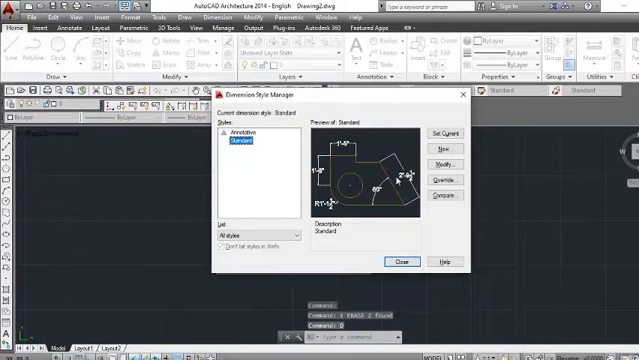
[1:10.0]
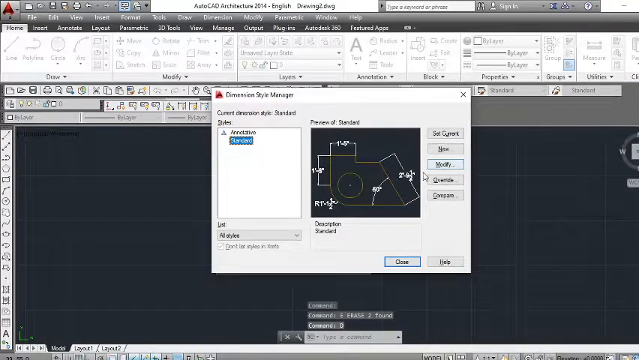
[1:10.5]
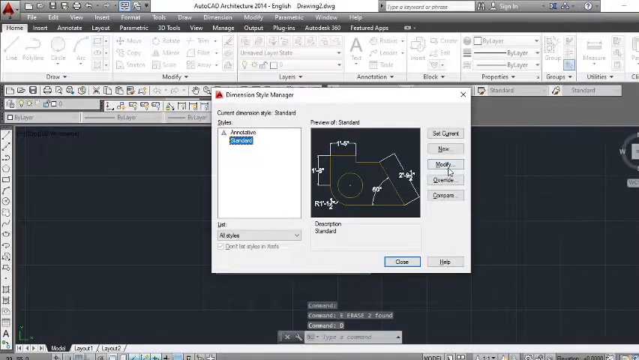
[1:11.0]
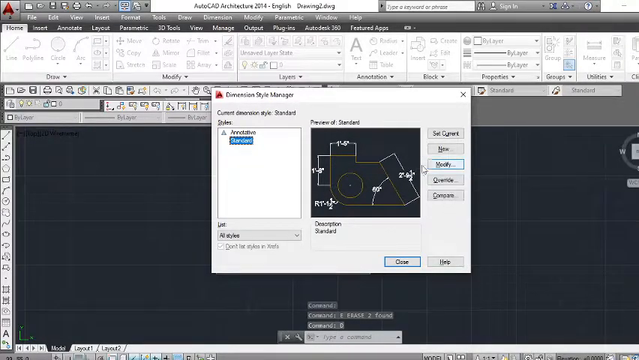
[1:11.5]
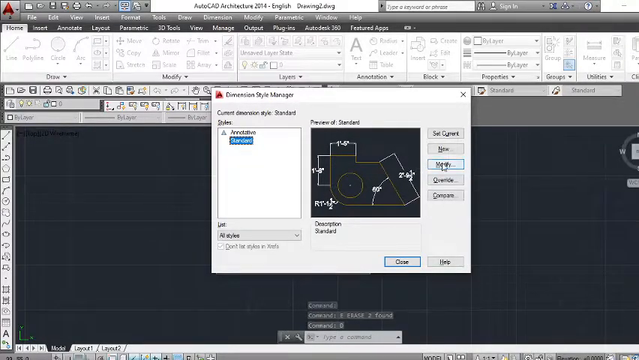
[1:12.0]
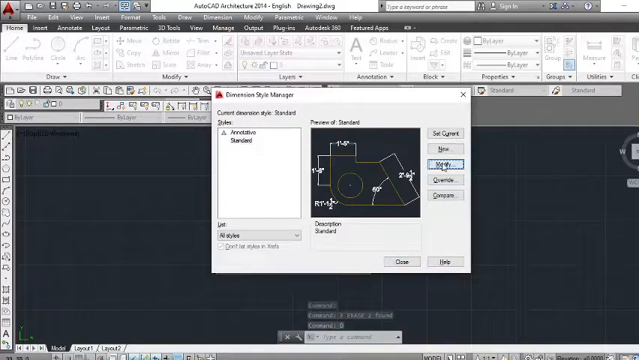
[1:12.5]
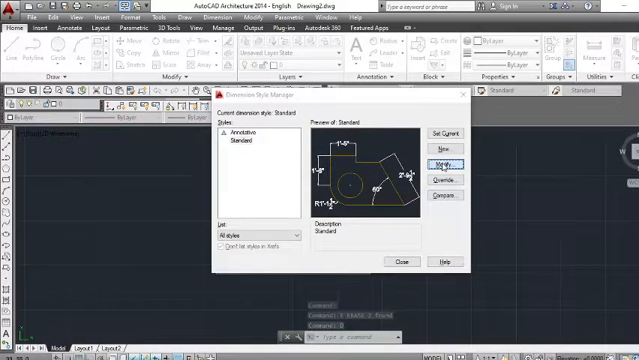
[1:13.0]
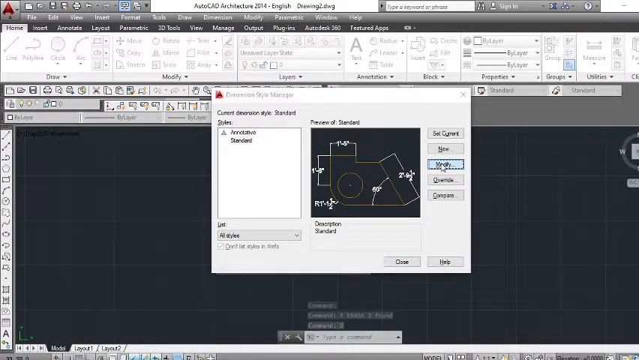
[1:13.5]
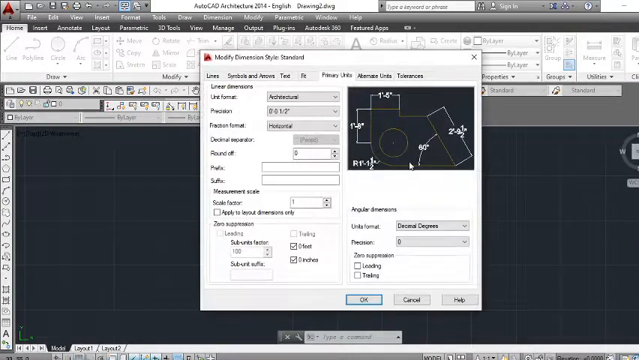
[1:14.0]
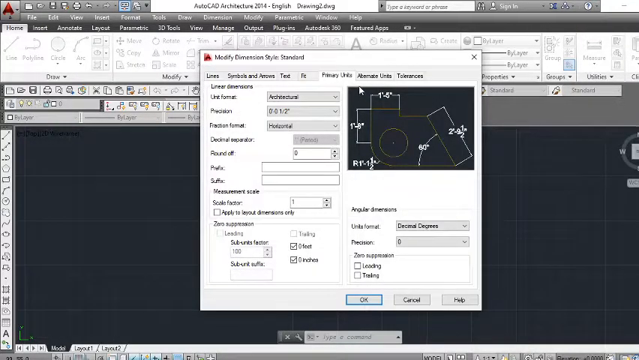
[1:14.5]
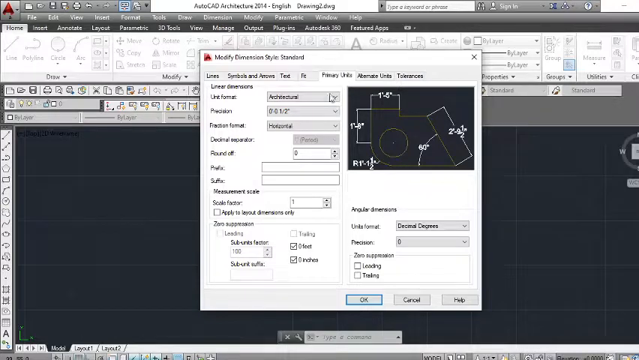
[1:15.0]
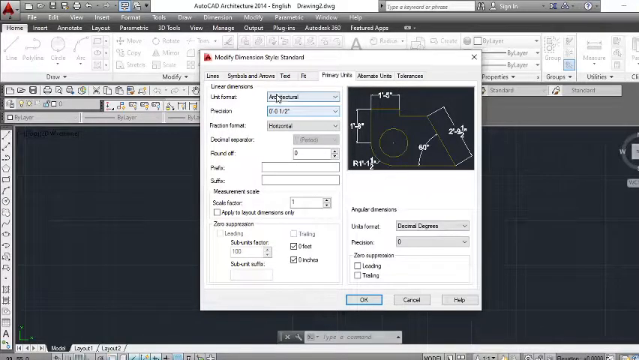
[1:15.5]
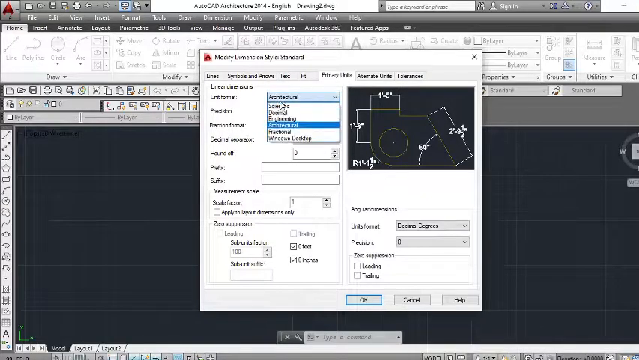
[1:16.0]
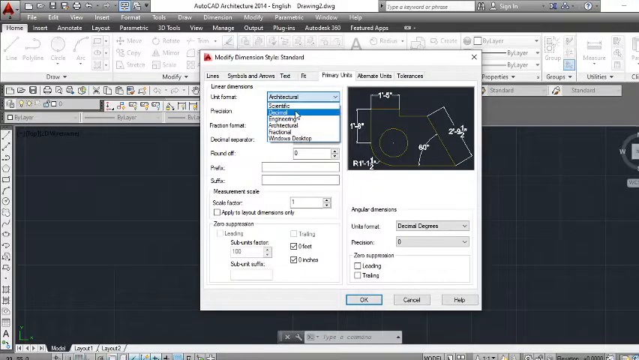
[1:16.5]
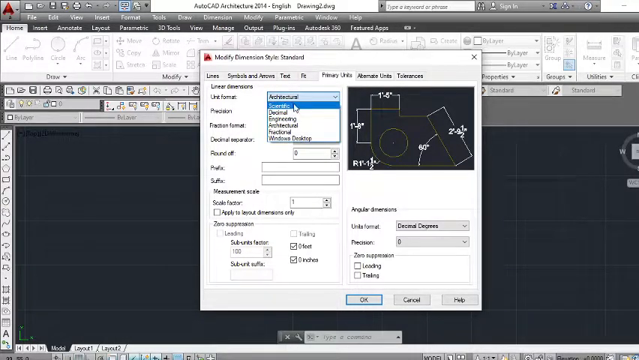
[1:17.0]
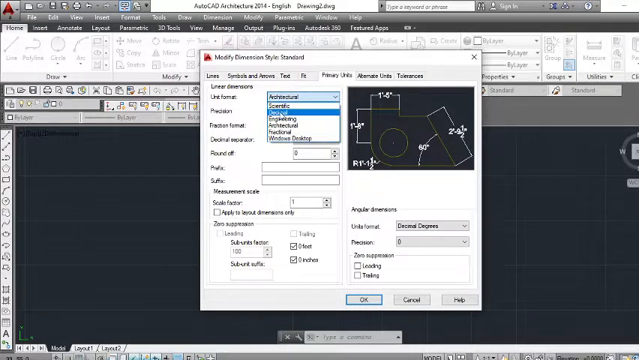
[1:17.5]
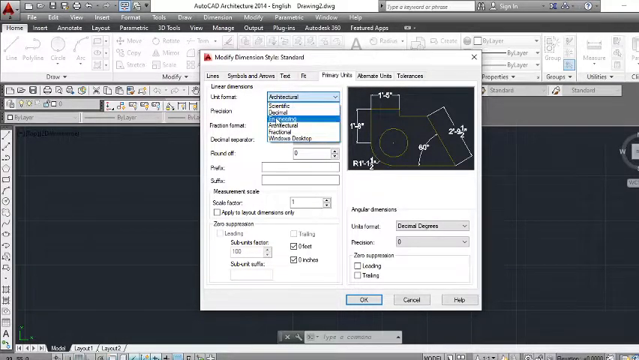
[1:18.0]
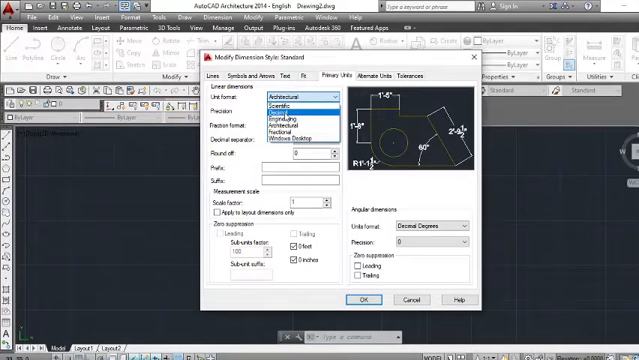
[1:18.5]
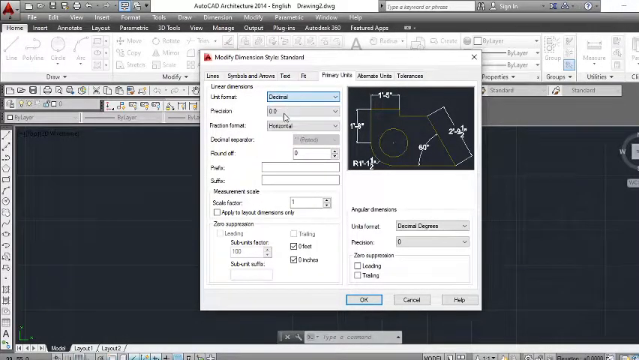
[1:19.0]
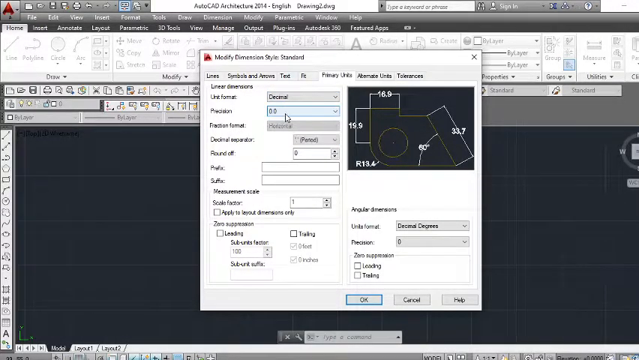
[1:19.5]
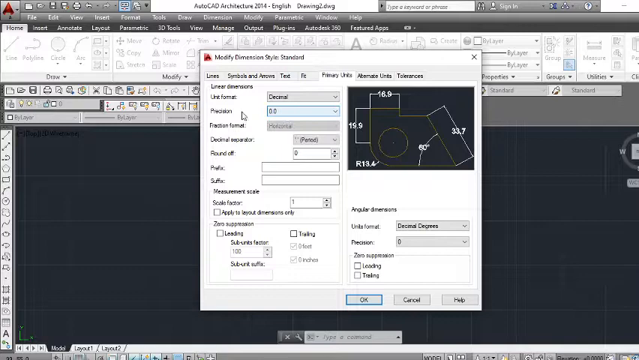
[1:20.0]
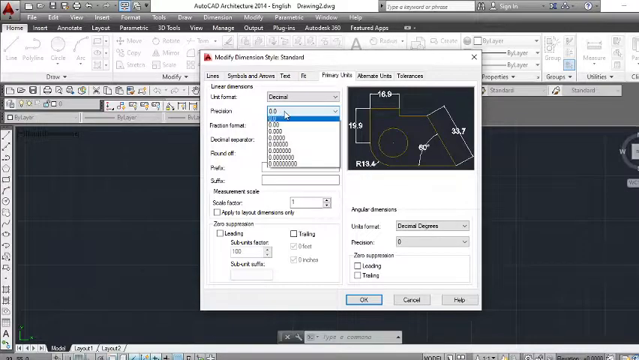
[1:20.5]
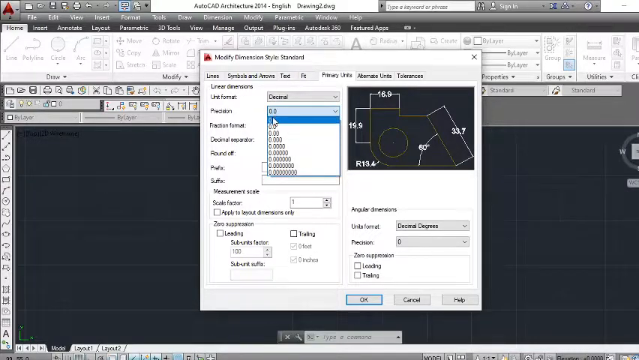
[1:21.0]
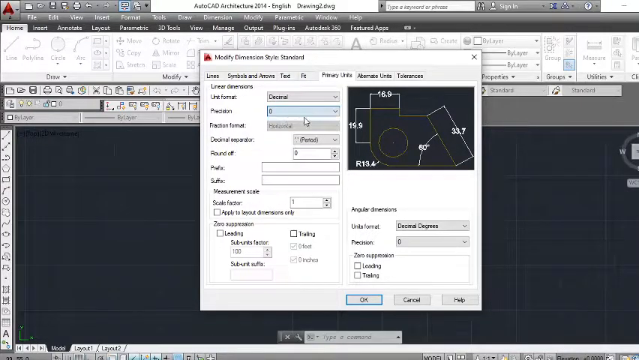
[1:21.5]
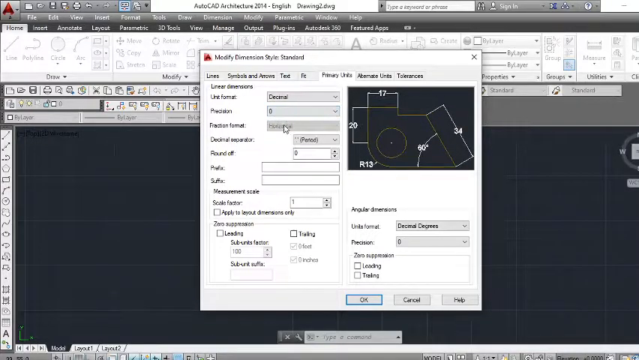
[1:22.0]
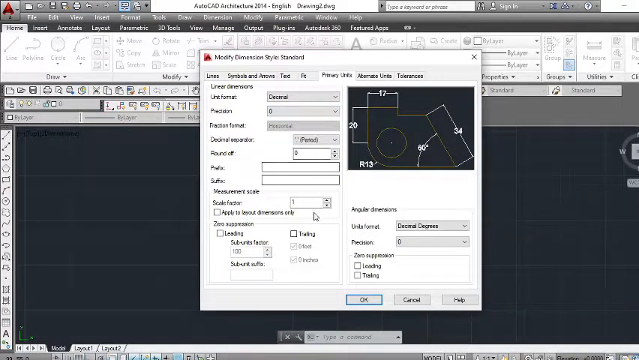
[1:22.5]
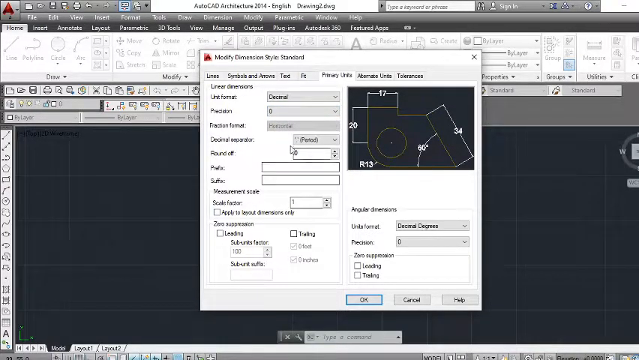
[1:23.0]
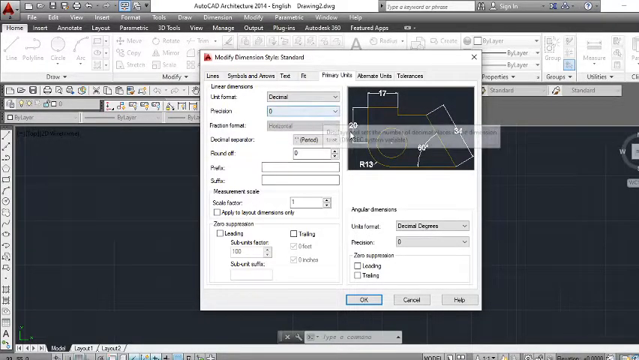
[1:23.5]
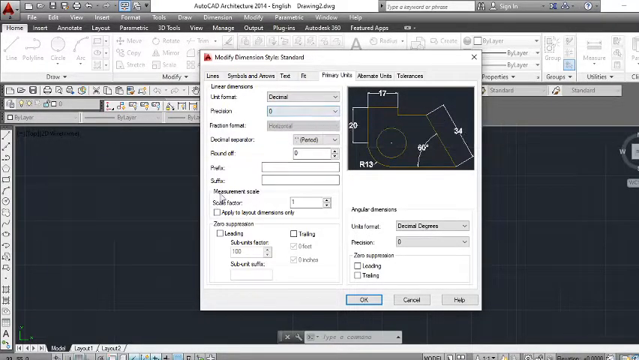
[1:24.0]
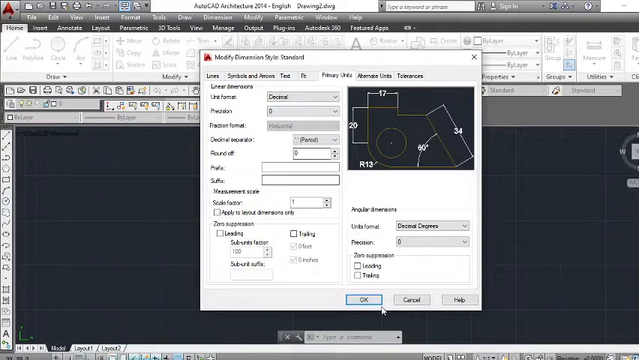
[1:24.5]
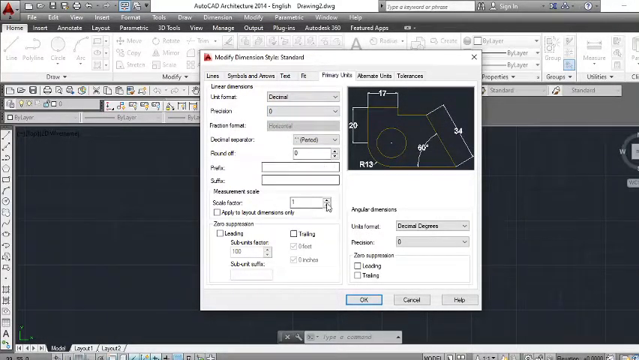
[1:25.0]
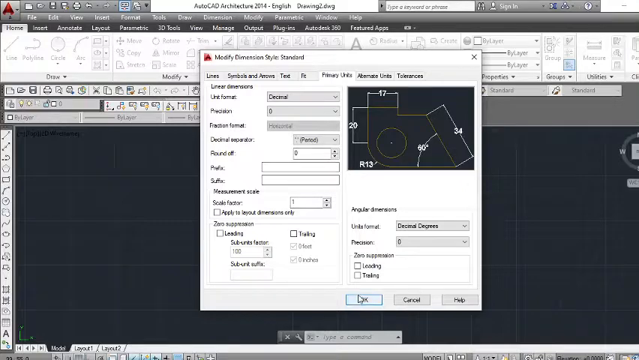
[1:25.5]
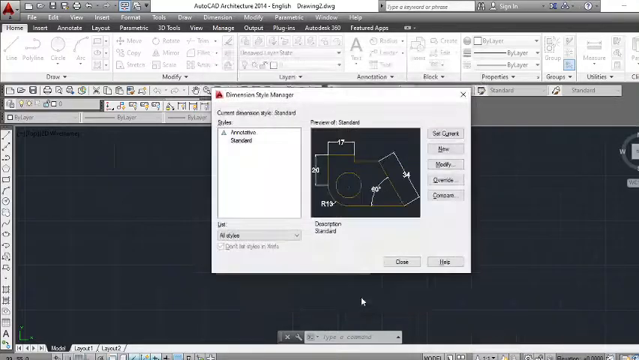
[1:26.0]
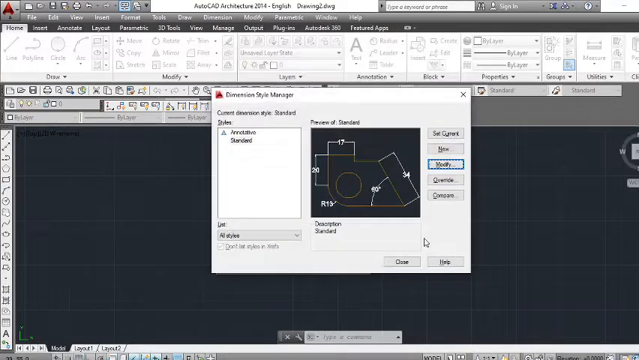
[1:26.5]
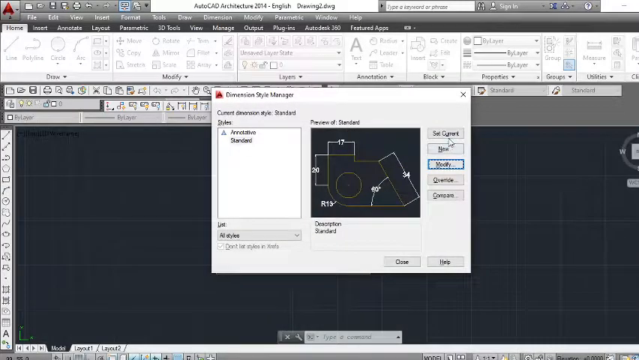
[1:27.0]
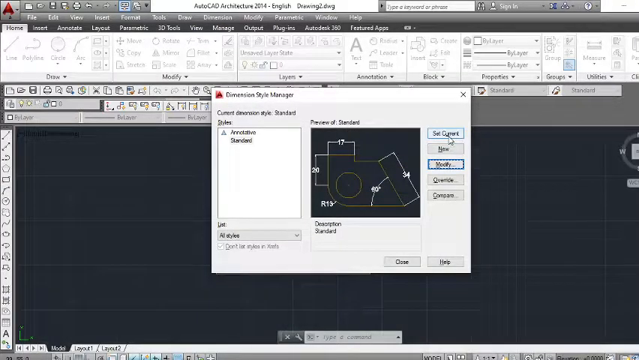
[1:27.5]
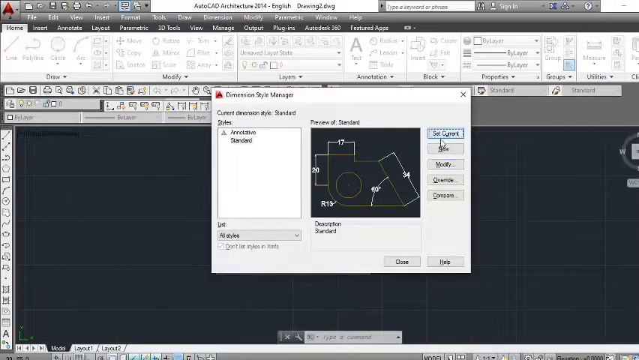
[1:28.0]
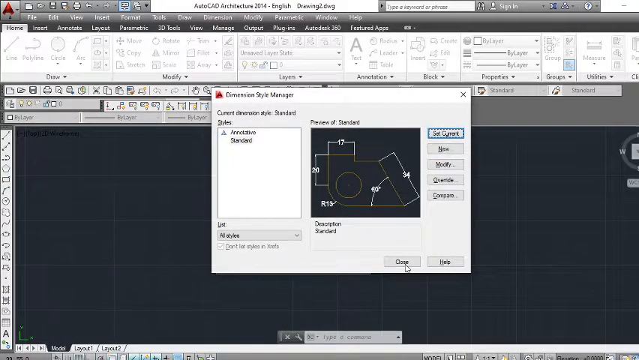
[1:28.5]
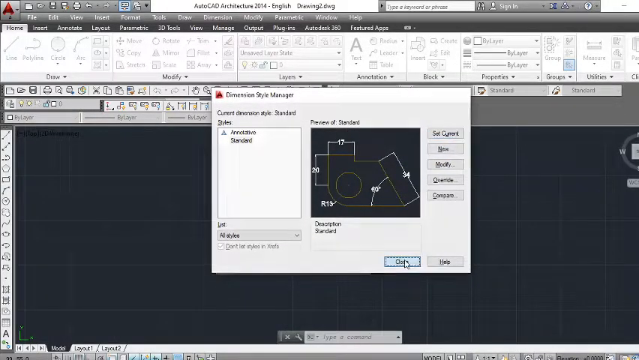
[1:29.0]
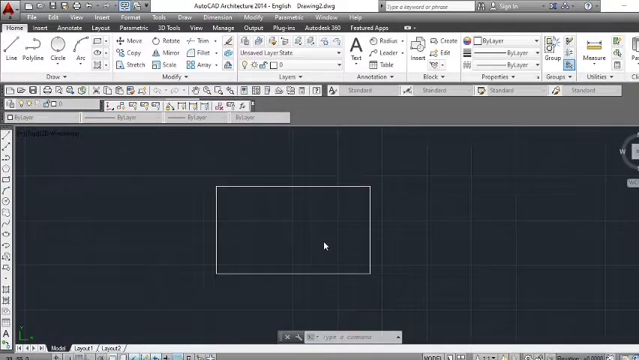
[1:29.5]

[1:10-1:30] The computer screen is completely green, with a light green cursor shaped like a triangle. Then it shows a screen where something is being designed: a drop-down menu is in front of a black rectangular area containing a circle and a couple of rectangles. The rectangles carry numbers showing one and five, possibly one and something else, then one and one half, and two and one half. A curved line runs from the left side of one rectangle to the bottom of the screen area. The cursor selects a value that appears to be at zero, then selects close, and the menu closes.